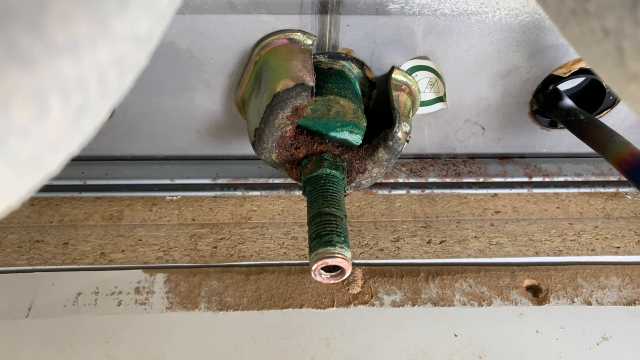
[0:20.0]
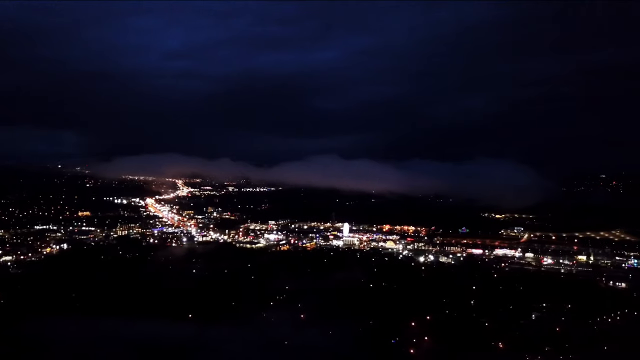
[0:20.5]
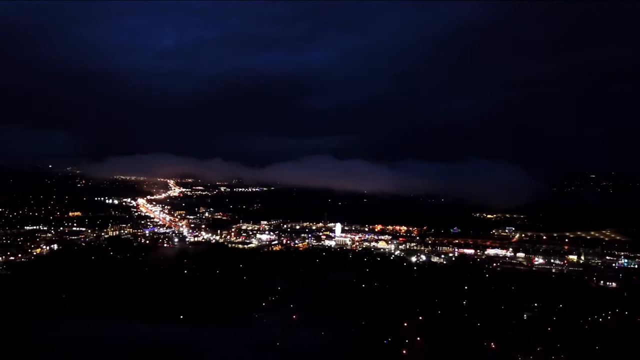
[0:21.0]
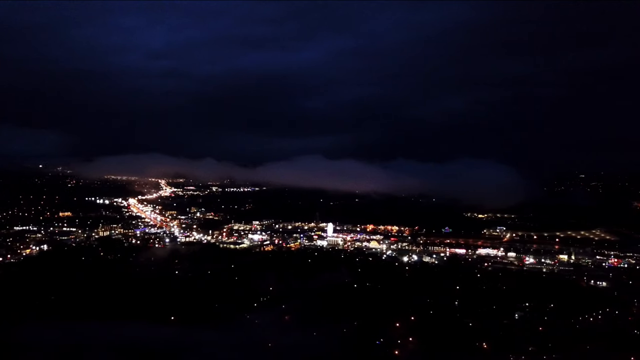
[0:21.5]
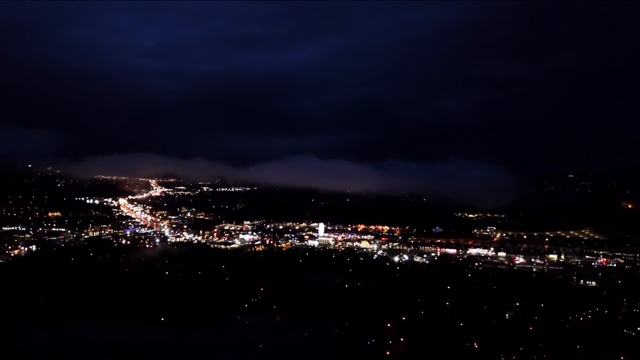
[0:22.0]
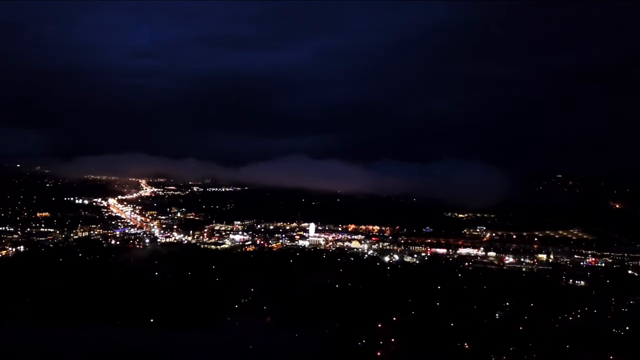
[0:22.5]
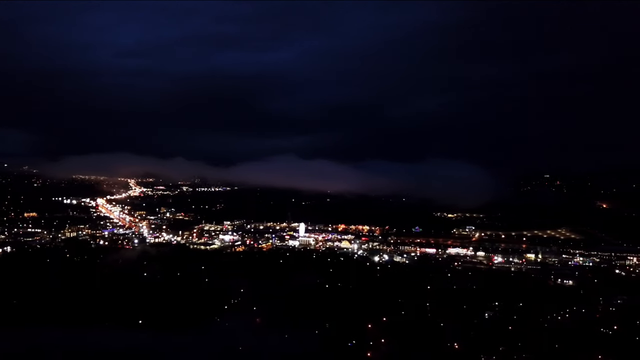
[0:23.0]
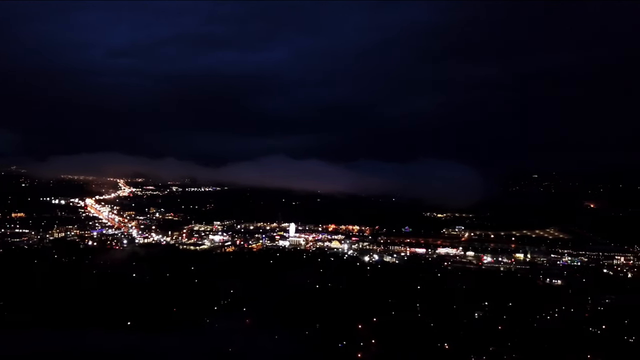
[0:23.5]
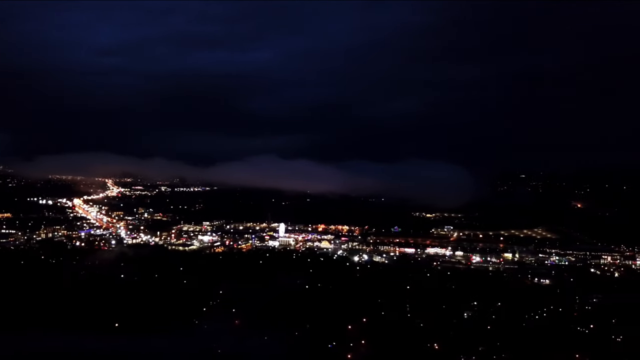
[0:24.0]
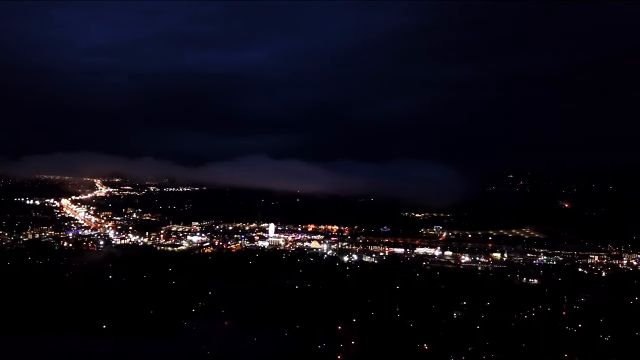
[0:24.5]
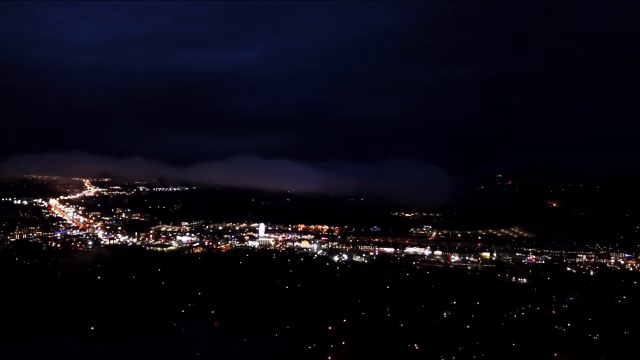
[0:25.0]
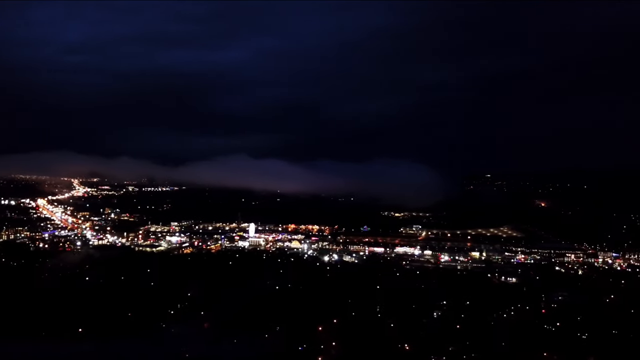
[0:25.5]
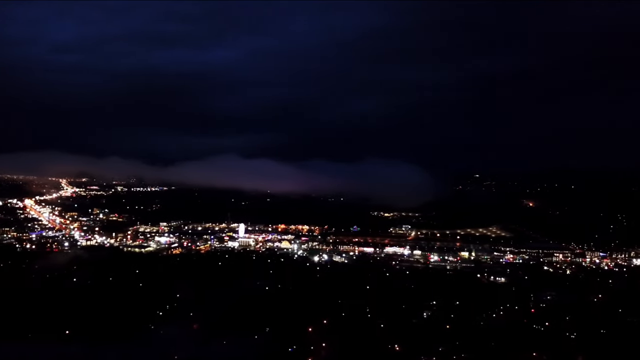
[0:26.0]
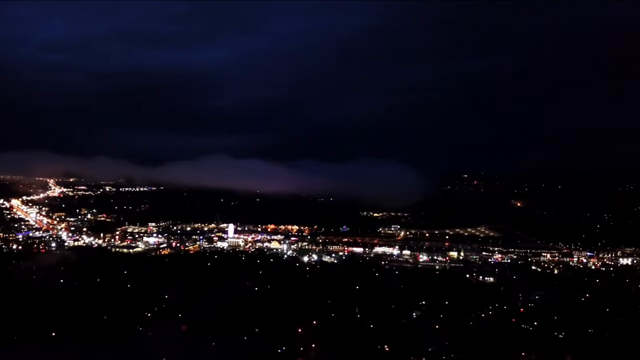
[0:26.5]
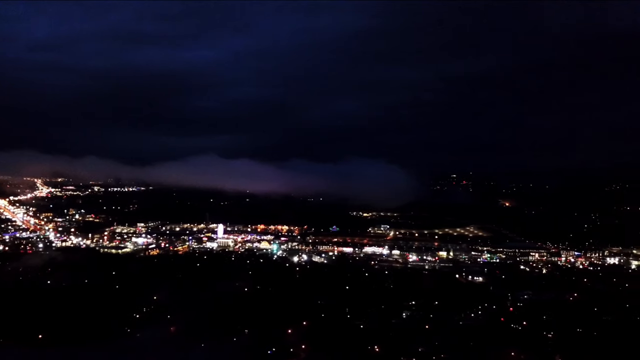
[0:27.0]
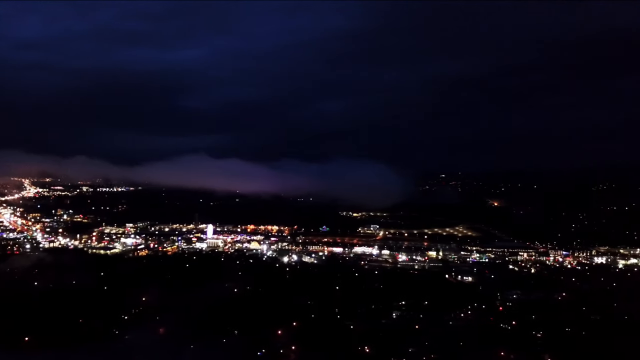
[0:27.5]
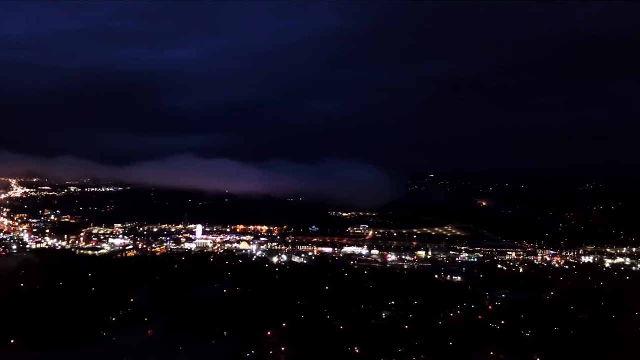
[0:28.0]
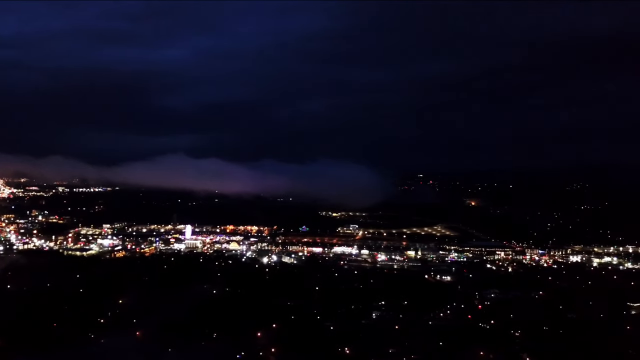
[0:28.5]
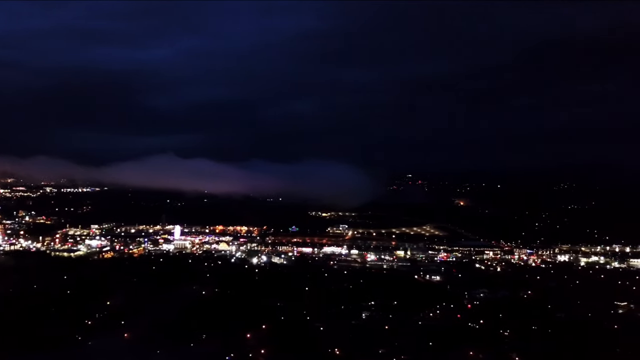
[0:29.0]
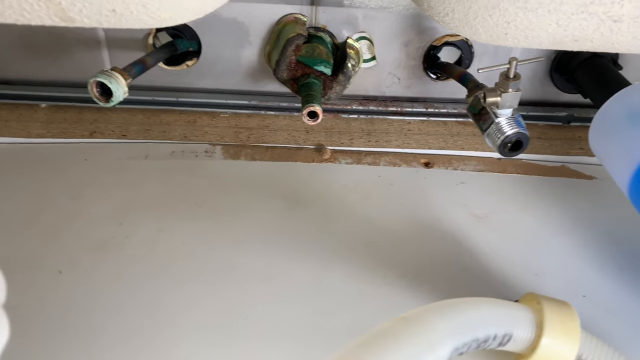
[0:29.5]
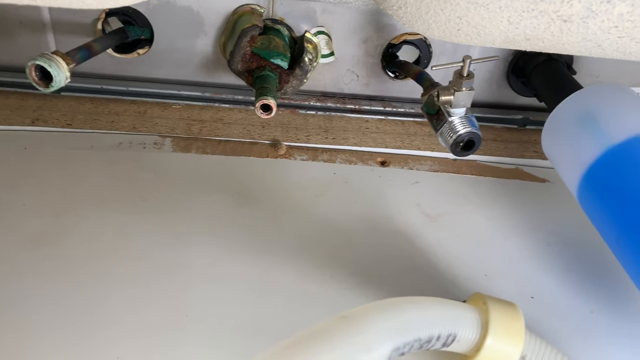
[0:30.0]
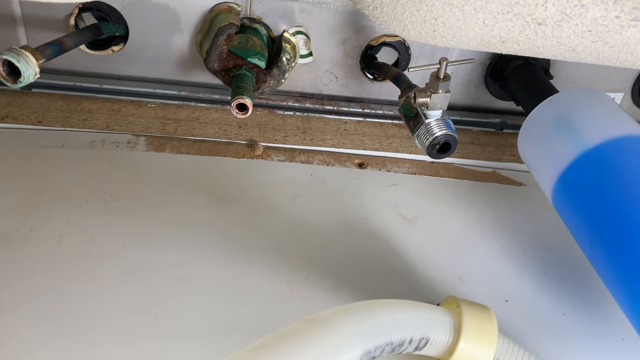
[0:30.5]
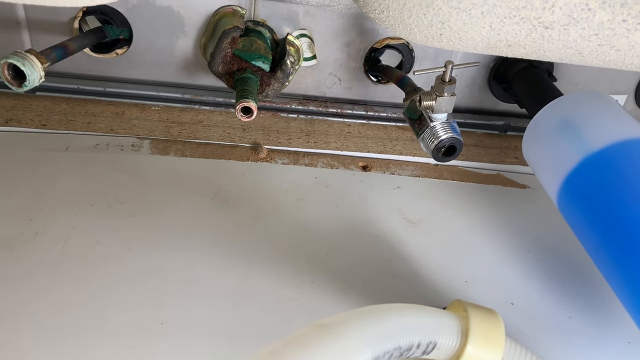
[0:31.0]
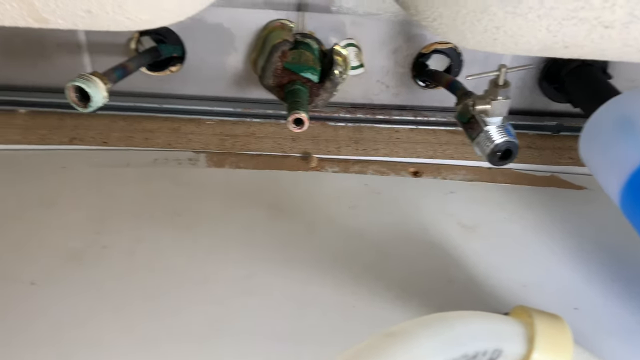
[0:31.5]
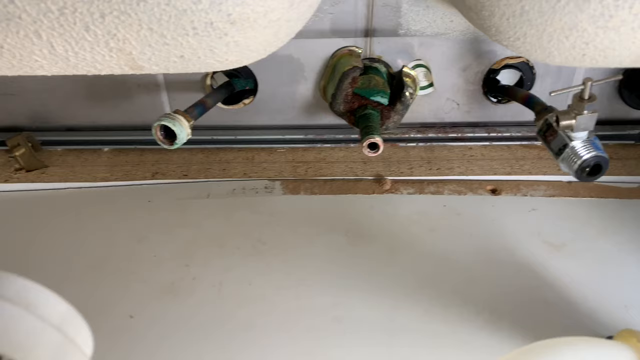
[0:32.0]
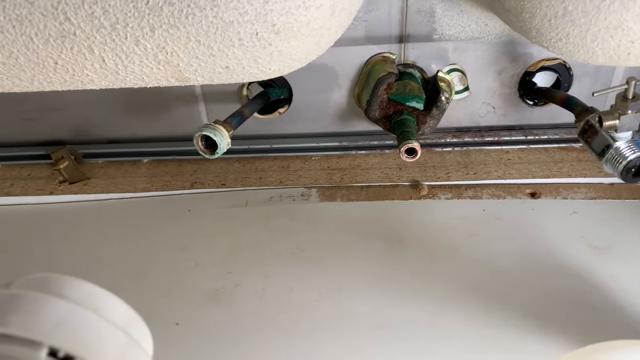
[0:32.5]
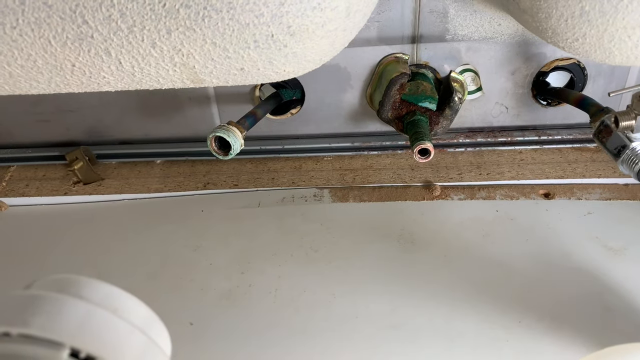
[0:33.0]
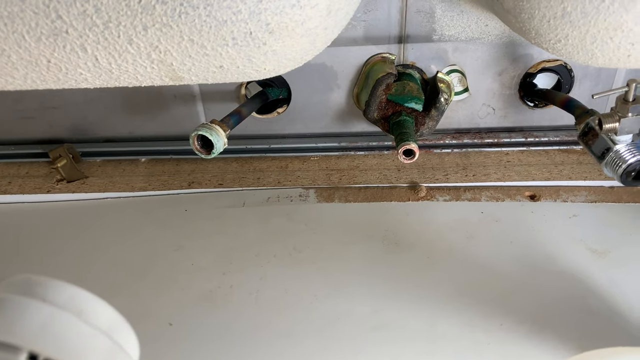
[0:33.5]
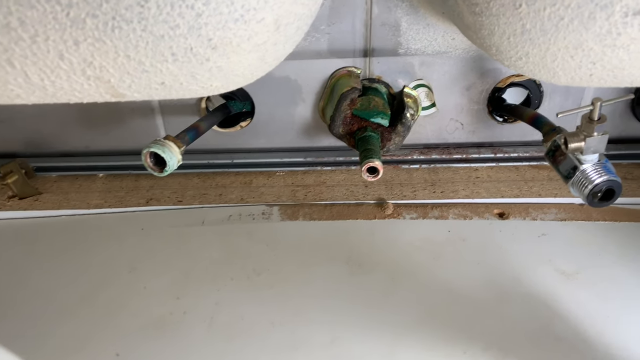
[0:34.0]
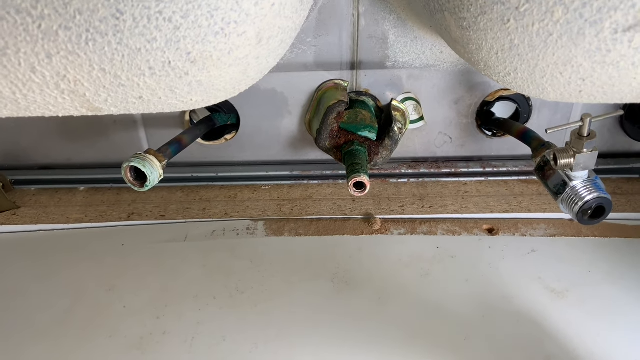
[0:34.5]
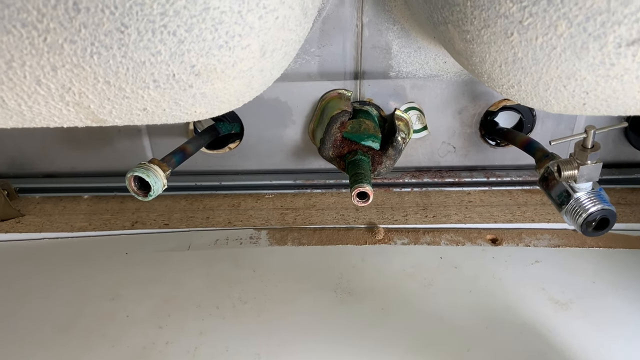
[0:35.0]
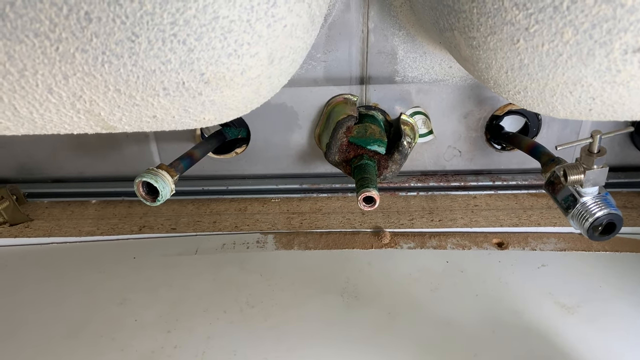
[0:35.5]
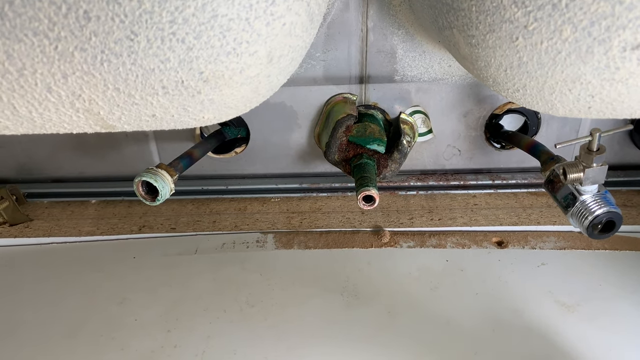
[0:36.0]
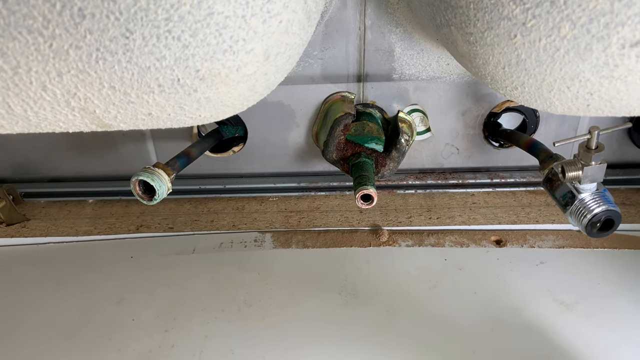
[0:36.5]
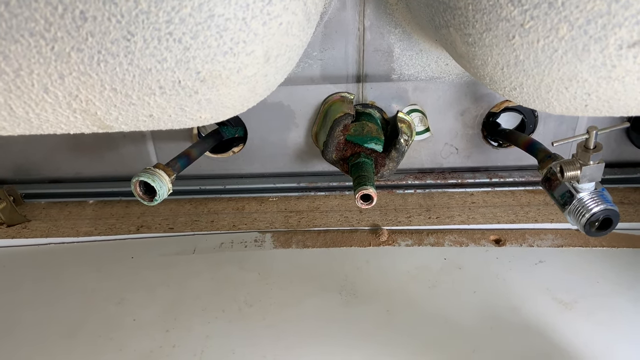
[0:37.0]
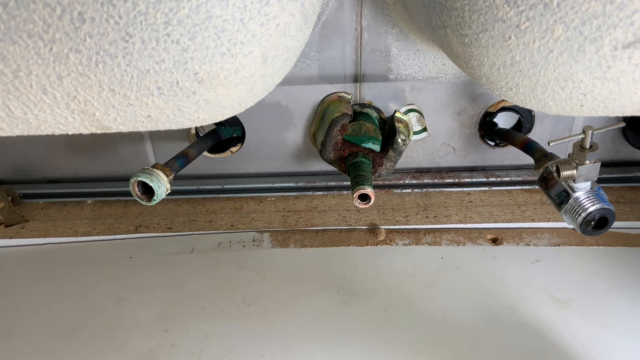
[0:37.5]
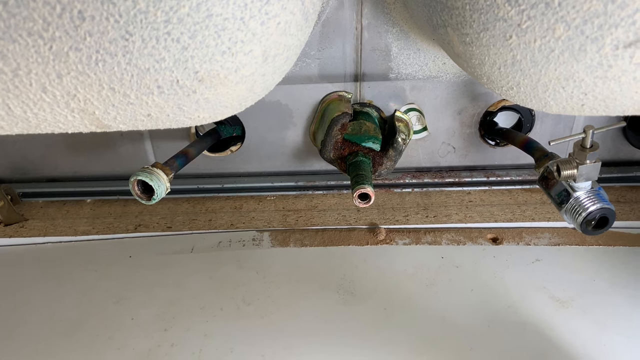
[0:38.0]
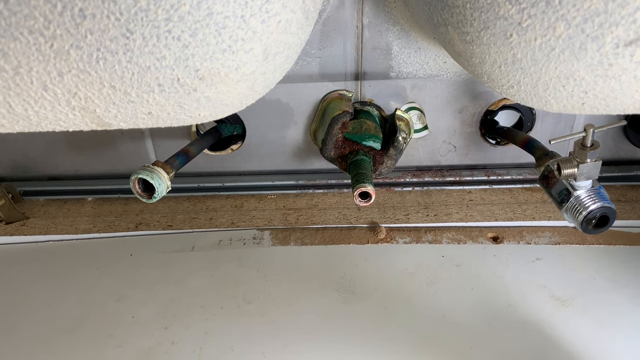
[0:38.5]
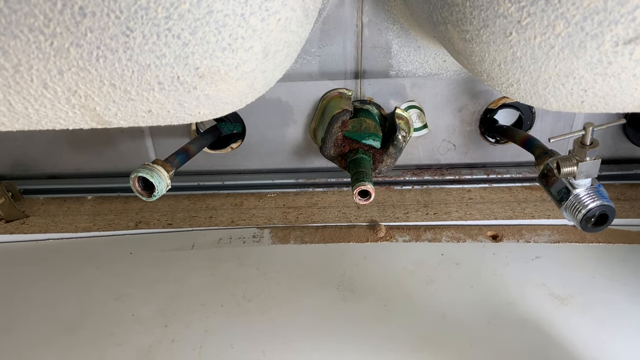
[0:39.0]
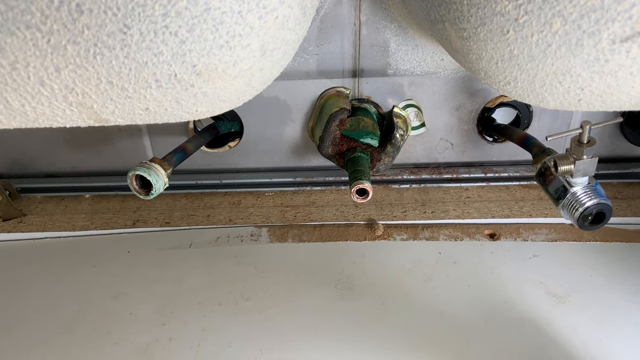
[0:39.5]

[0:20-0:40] A nighttime view of what looks like a cityscape appears. The image is mainly dark; from halfway up is what might be the sky, with shading in parts as if there might be cloud cover. Below halfway the background is again very dark, lit by a wavy line of light that starts just inside the middle of the left-hand side, runs vertically down a little, begins to zigzag, and then continues on a very slight diagonal down towards the bottom right of the screen. It looks very much like the lights of a city seen from a distance. The camera rolls right and the image changes to a view looking up inside the cupboard underneath the sink, where the fiberglass bottoms of the stainless steel sink unit are visible on either side. There are three holes with disconnected pipes, presumably for connecting the hot tap, the cold tap and the middle source that mixes them. On the right-hand one there is some sort of metal tightening device around the pipe itself, with stainless steel thread around the bottom of the disconnected fitting.